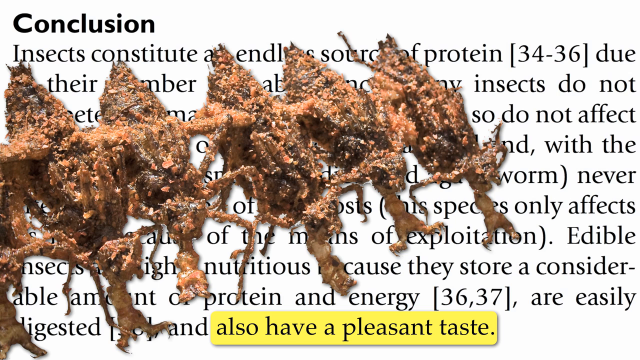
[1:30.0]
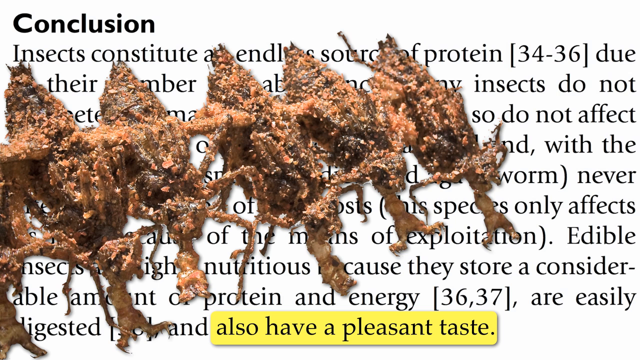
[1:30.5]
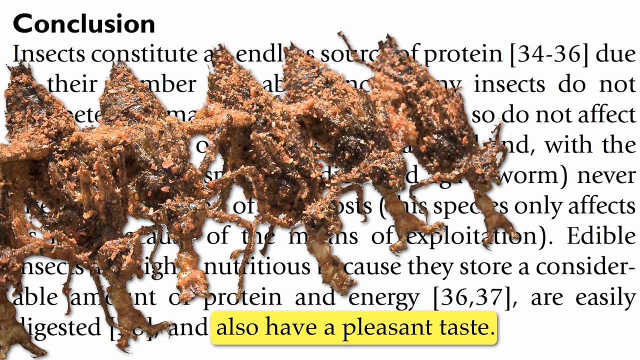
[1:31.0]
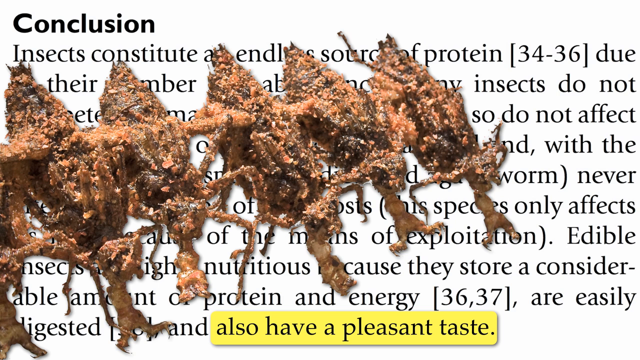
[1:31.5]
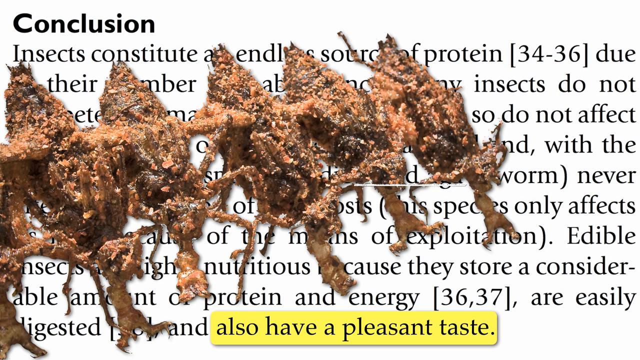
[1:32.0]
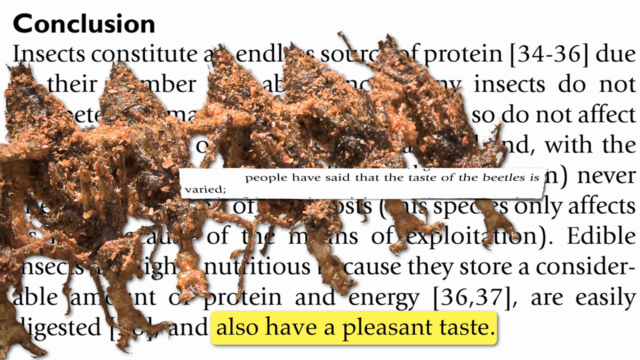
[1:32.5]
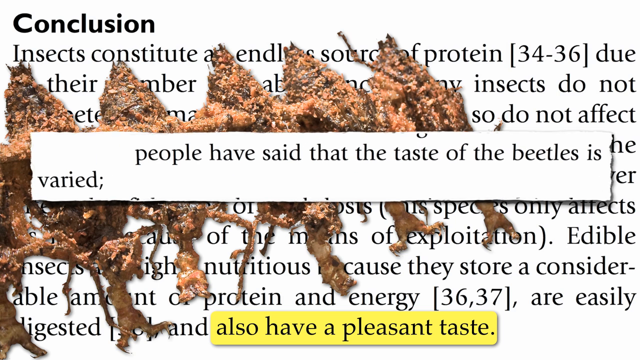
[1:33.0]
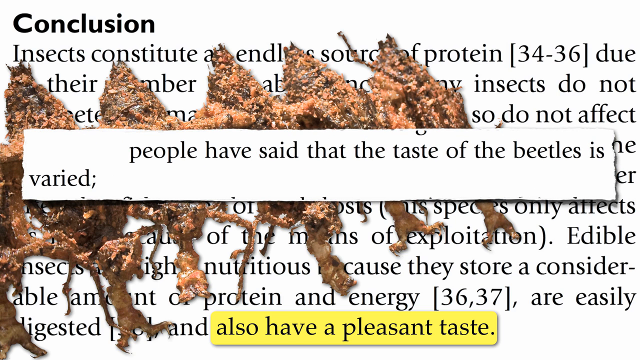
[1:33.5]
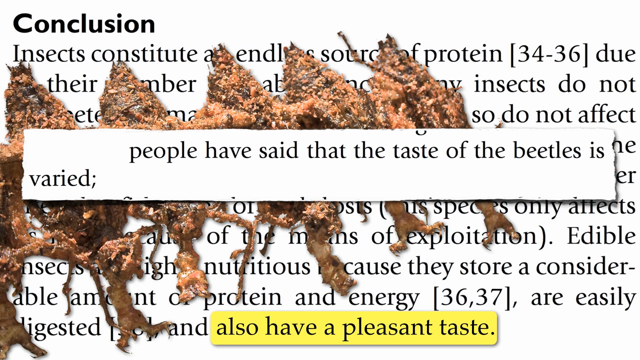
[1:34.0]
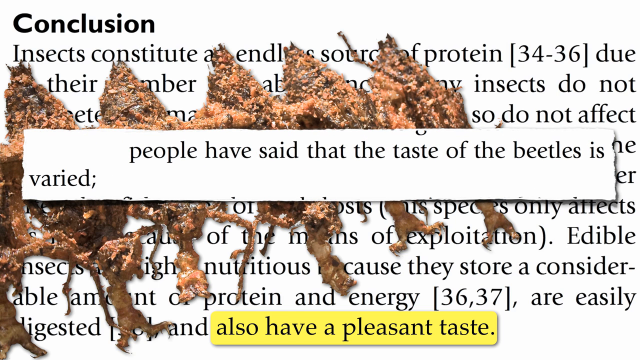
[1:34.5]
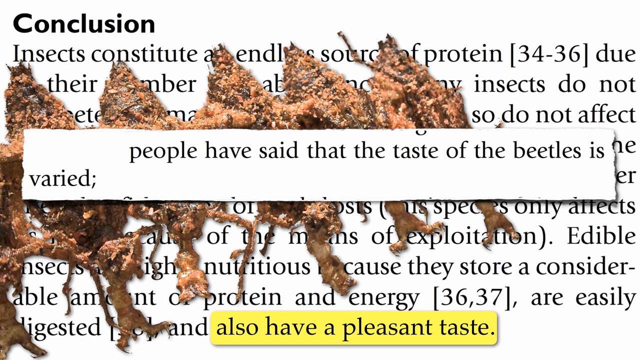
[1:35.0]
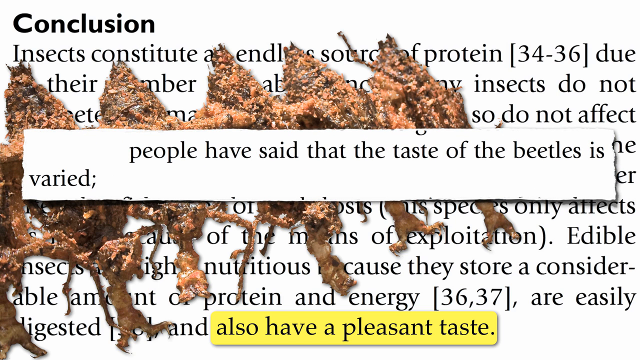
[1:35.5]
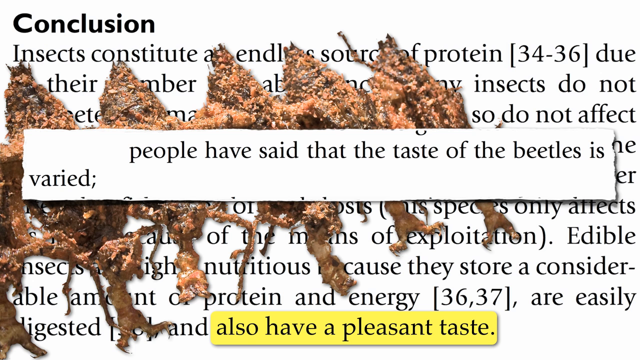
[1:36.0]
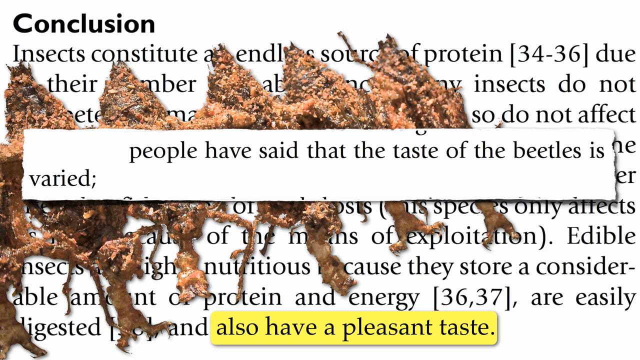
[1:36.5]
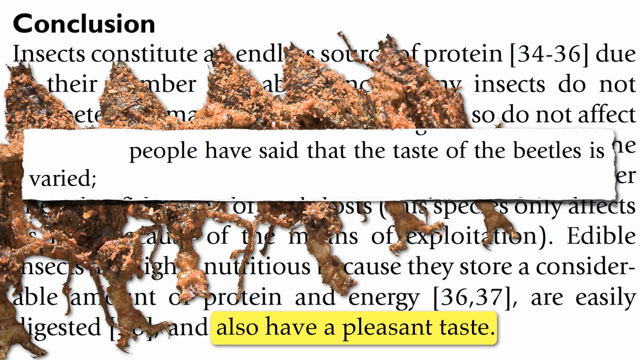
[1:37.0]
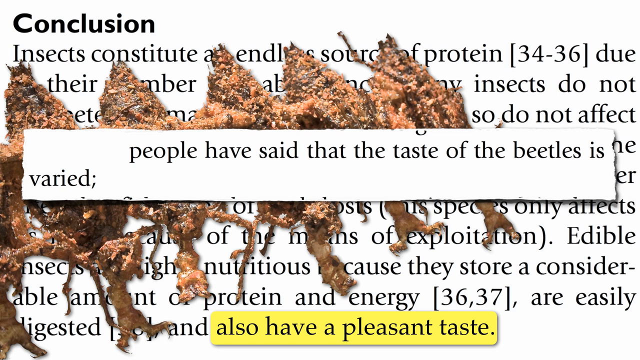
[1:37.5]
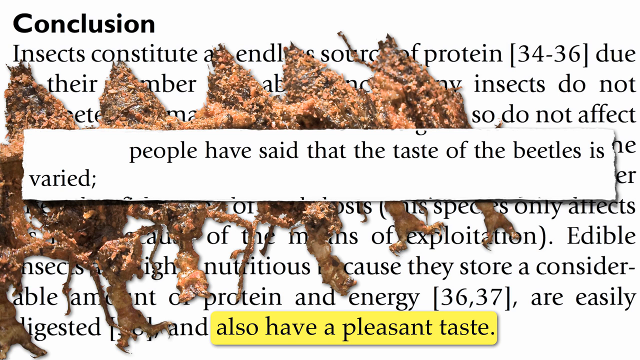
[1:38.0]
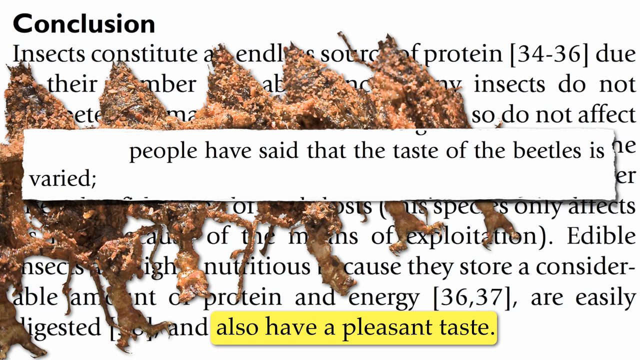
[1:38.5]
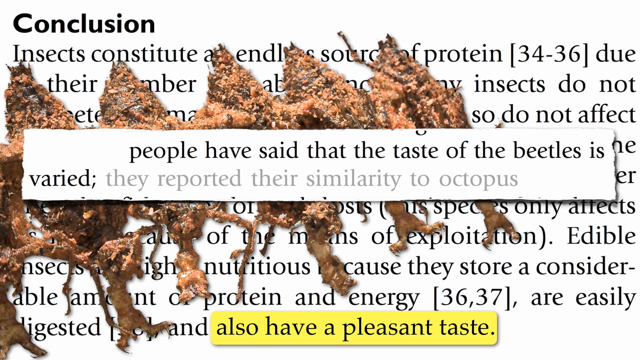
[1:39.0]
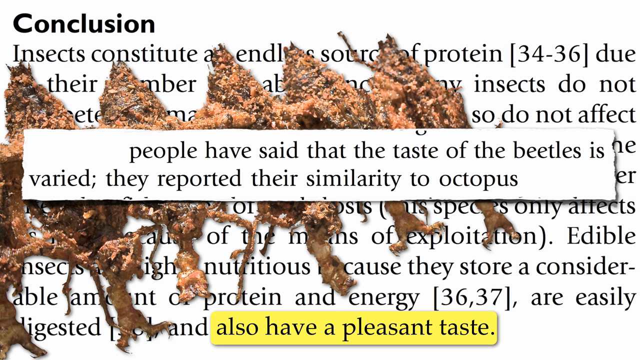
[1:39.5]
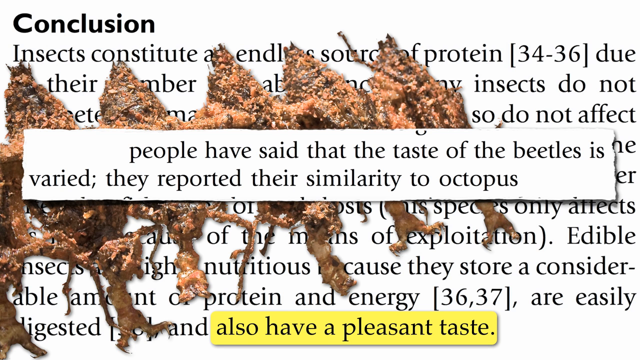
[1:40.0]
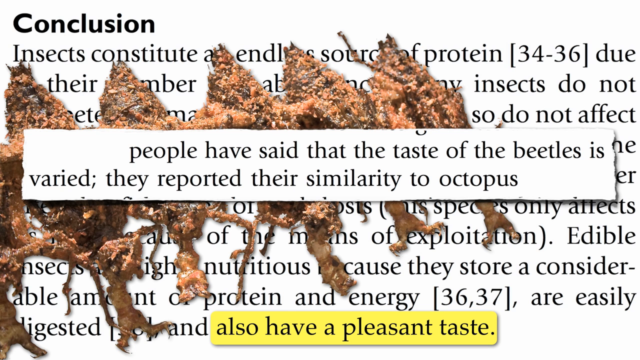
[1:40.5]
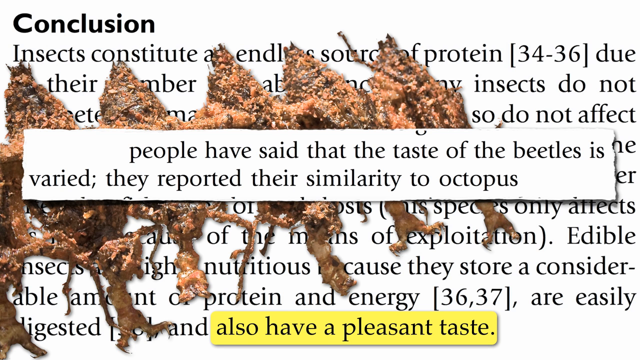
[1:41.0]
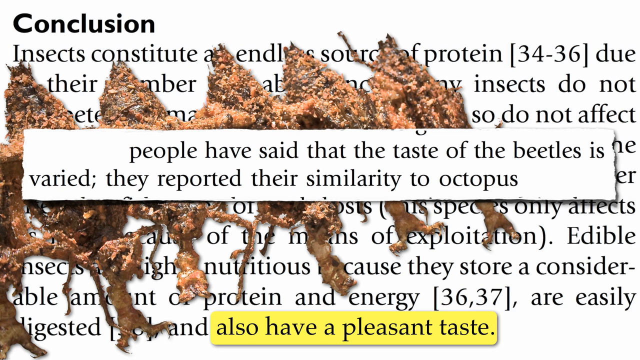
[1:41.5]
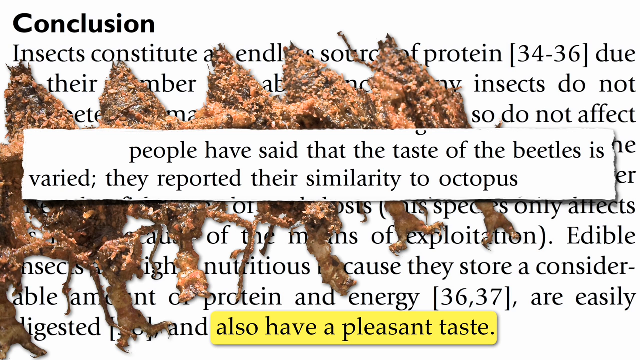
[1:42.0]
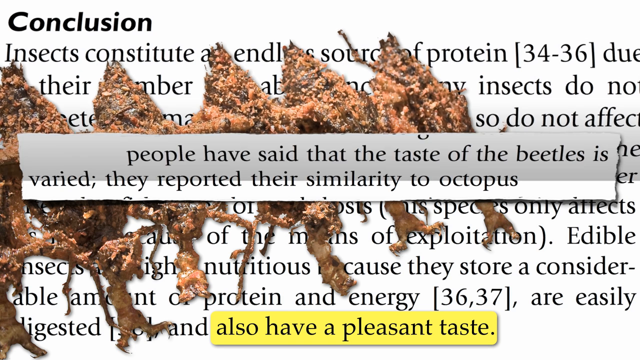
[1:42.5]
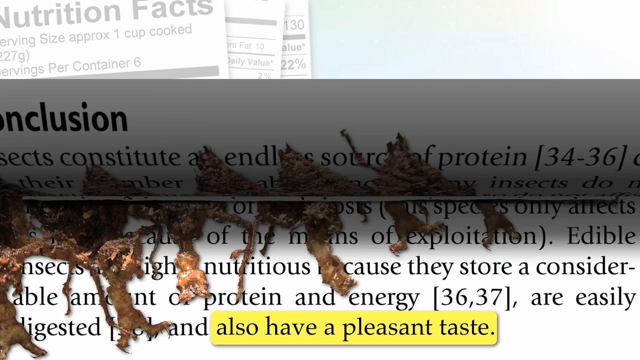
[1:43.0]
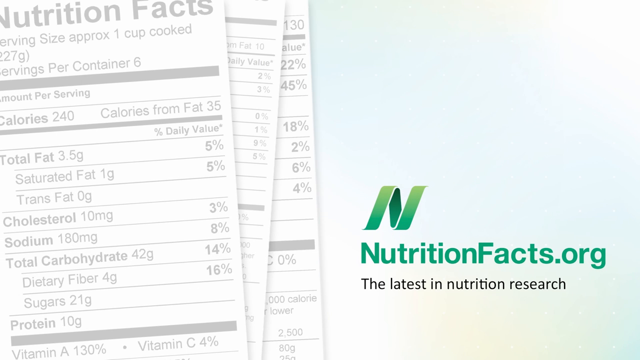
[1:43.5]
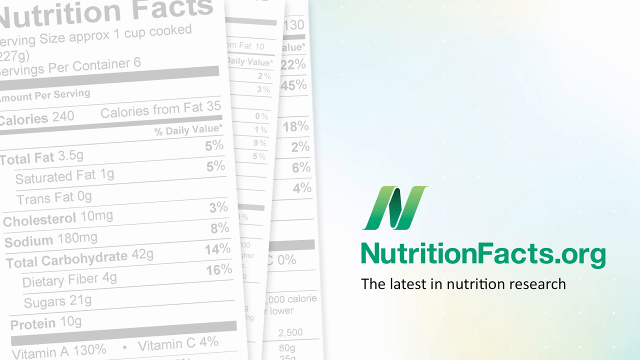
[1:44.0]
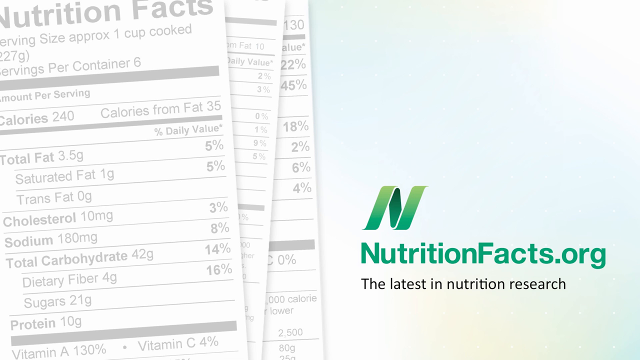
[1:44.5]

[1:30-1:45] The page with "conclusion" in the top left remains, with five brown crickets overlaid on top of it, looking baked or fried. An excerpt comes up that says "people have said that the taste of beetles is varied," and at the bottom "also have a pleasant taste" is still highlighted. The page then folds down from the top and the video goes back to the original screen, with the nutrition facts labels on the left side, light blue on the right side, a big green N, "nutritionfacts.org" in green, and underneath it in black, "the latest in nutrition research."